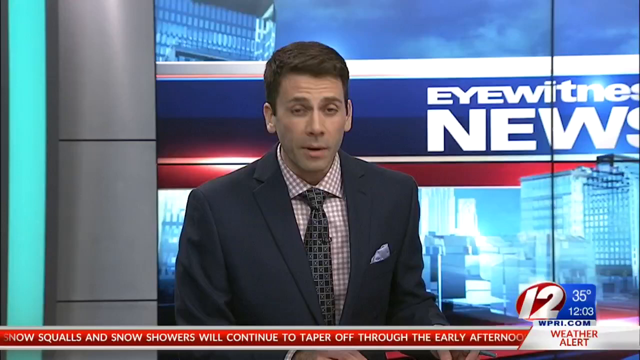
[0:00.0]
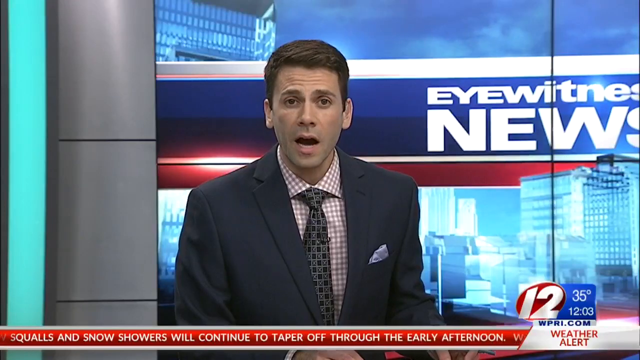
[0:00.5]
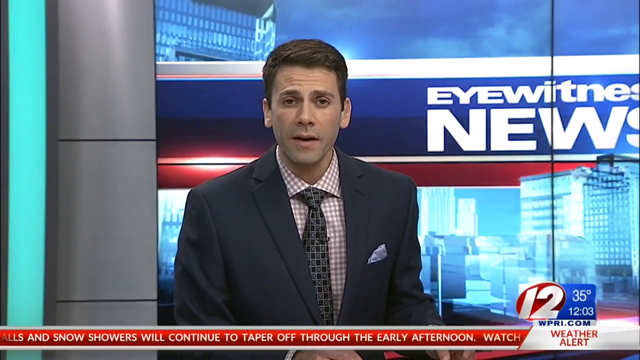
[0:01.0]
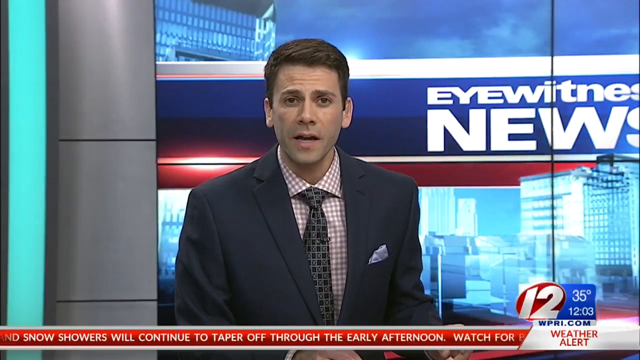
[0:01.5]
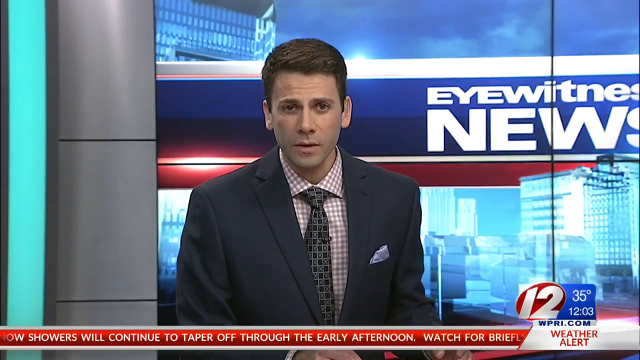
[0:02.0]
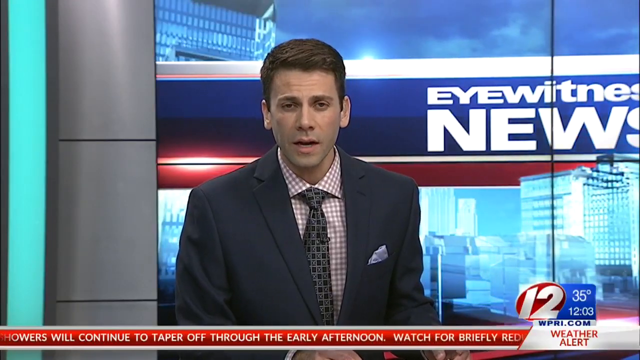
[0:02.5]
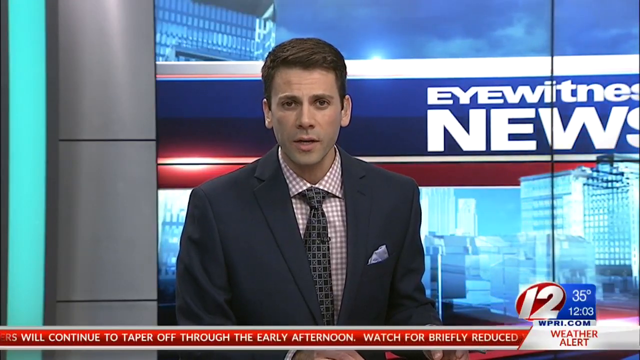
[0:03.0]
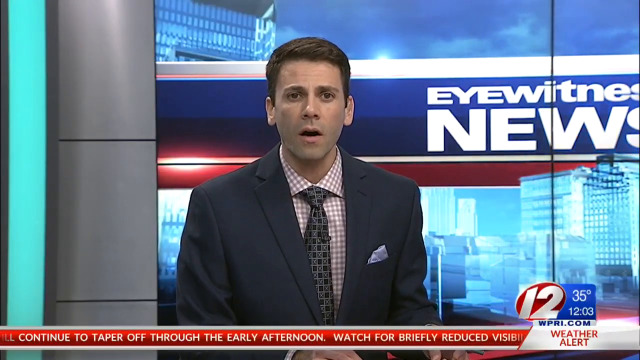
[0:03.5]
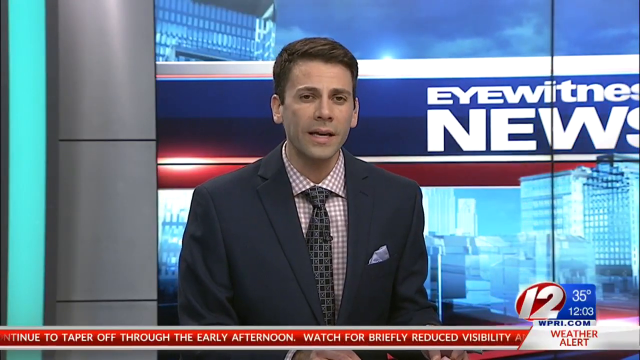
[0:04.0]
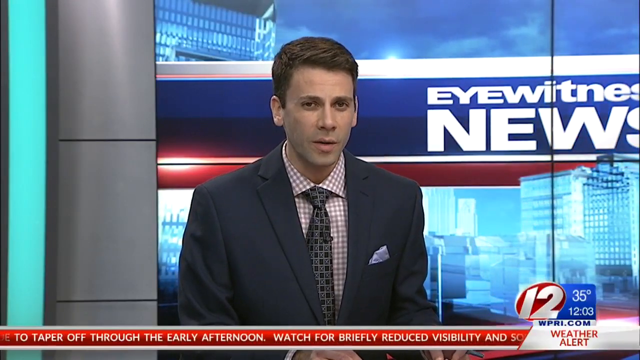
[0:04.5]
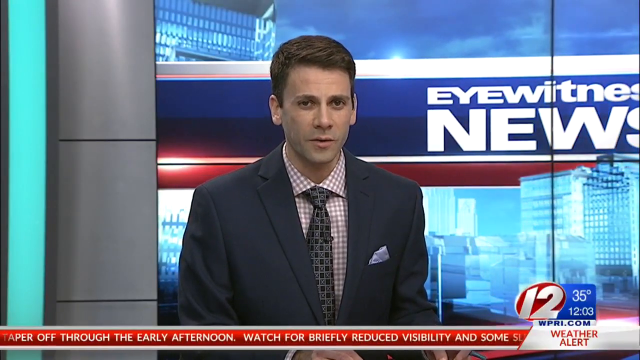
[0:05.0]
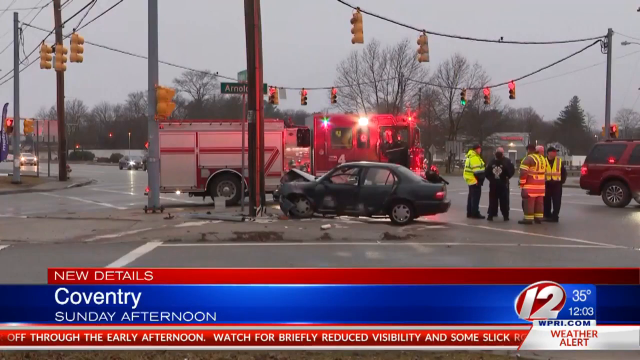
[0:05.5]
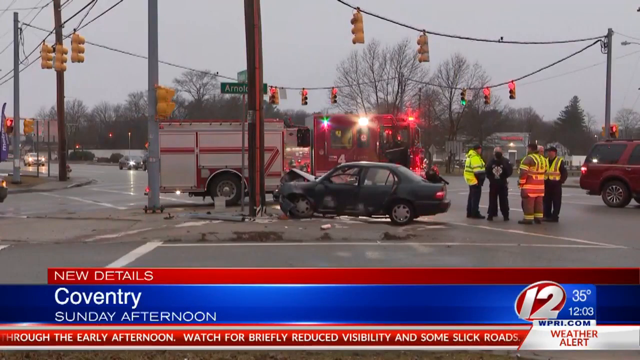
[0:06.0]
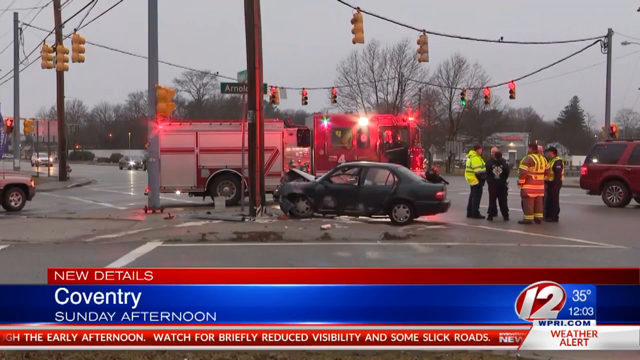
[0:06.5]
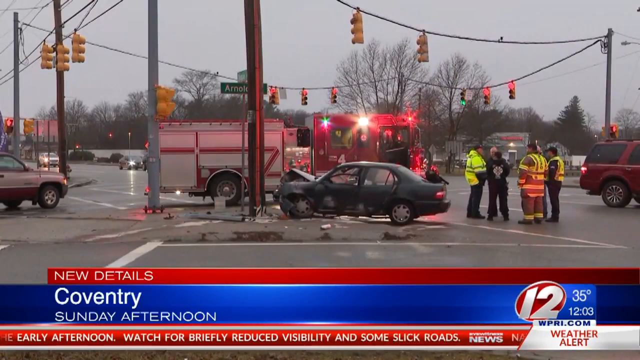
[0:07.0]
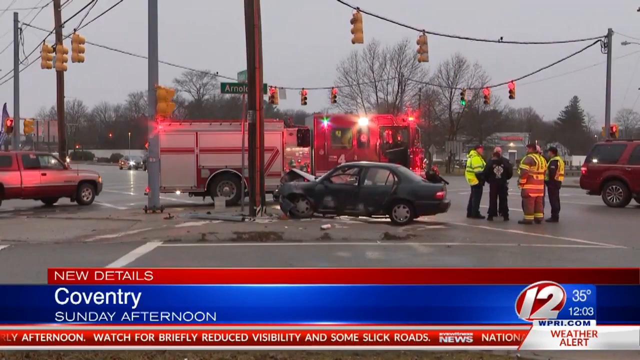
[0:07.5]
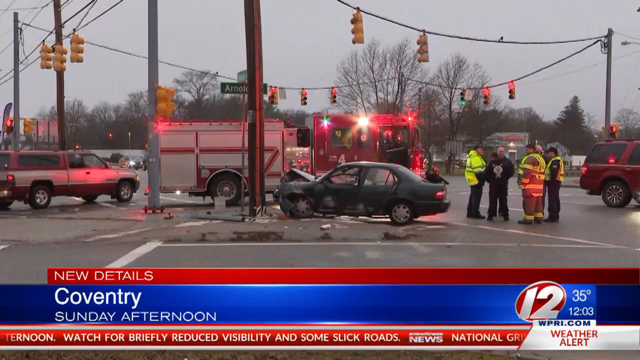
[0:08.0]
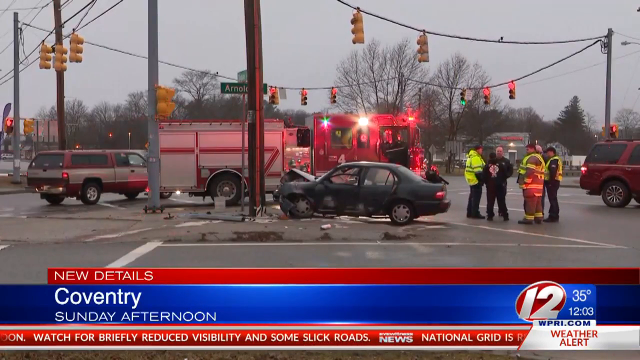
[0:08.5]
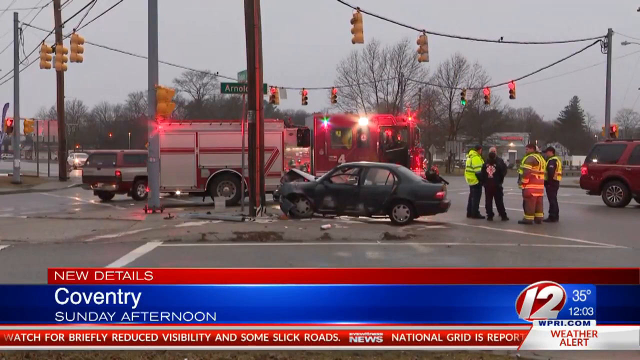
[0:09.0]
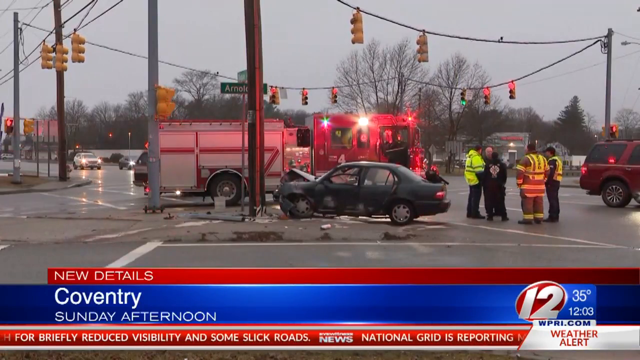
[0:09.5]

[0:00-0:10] A man wearing a black jacket and a boxy pink shirt with a dotted tie is presenting, moving his hands as he talks. The screen then shows an accident: it seems a car has hit a pole. Five people, apparently paramedics, are there. On the left side a car is moving, while the reddish car on the right is standing still and not moving. At the bottom, white text on a reddish background reads "new details", and white text on a blue background reads "Coventry".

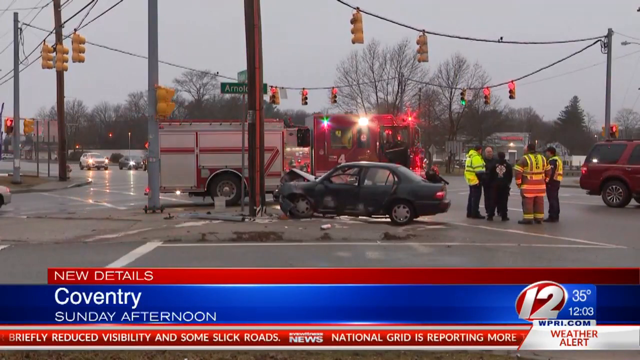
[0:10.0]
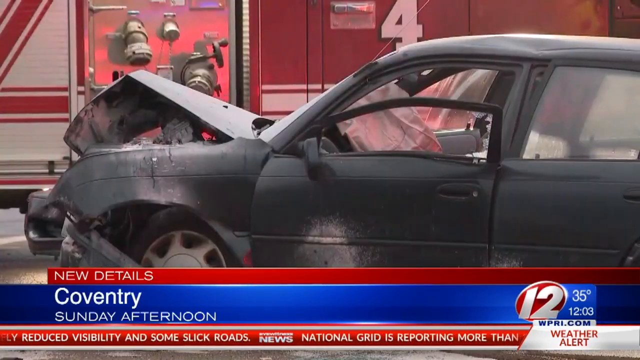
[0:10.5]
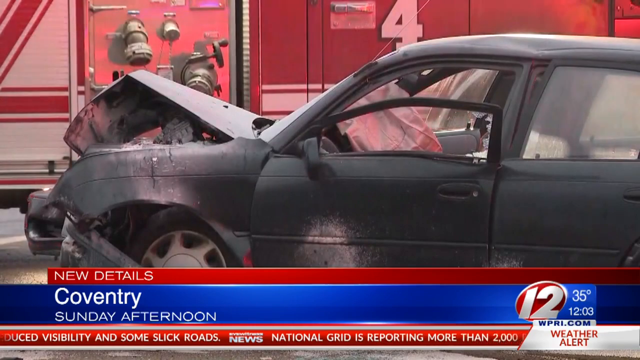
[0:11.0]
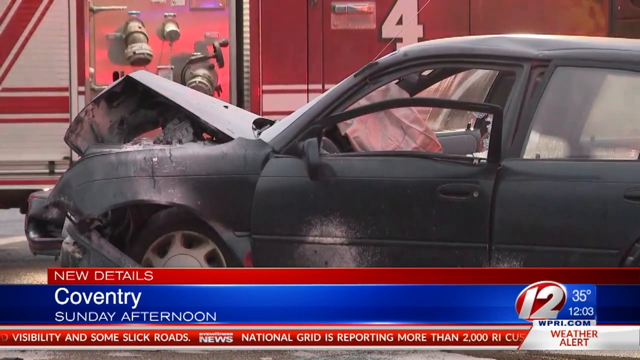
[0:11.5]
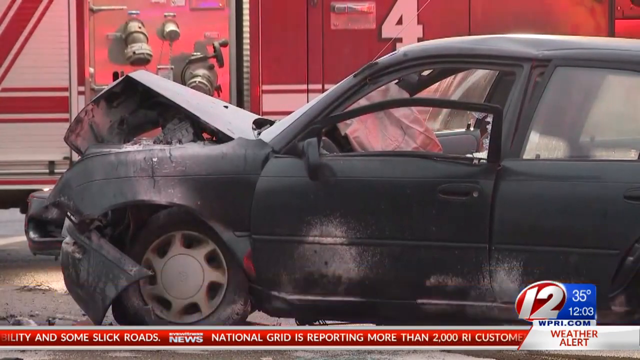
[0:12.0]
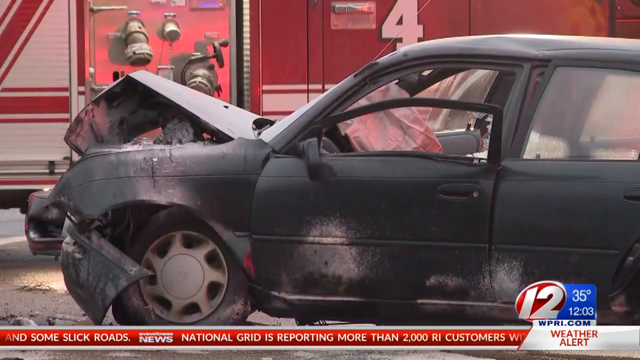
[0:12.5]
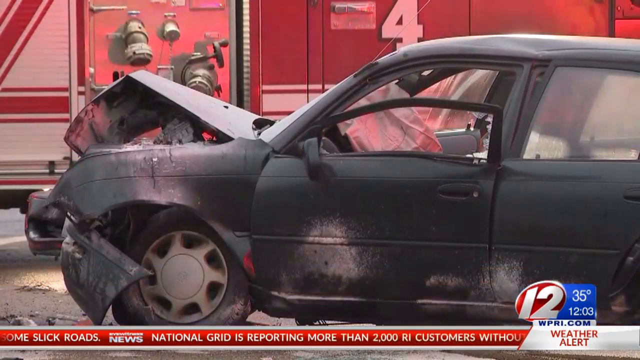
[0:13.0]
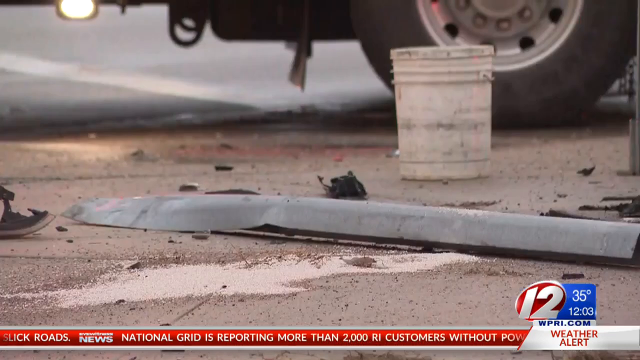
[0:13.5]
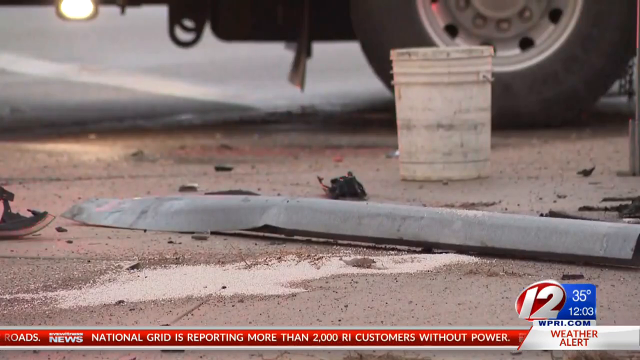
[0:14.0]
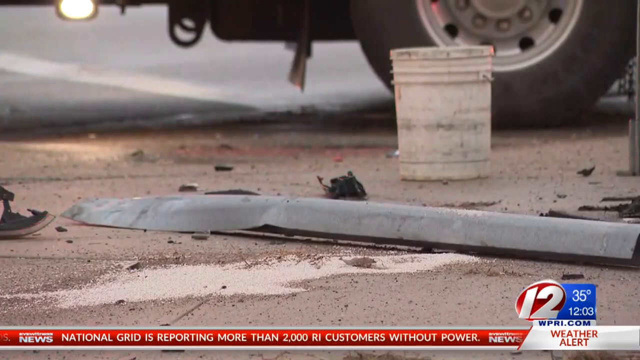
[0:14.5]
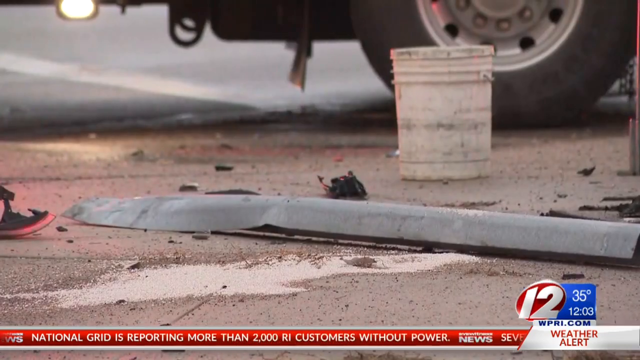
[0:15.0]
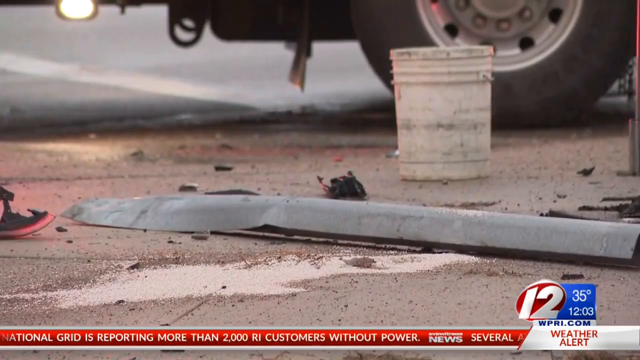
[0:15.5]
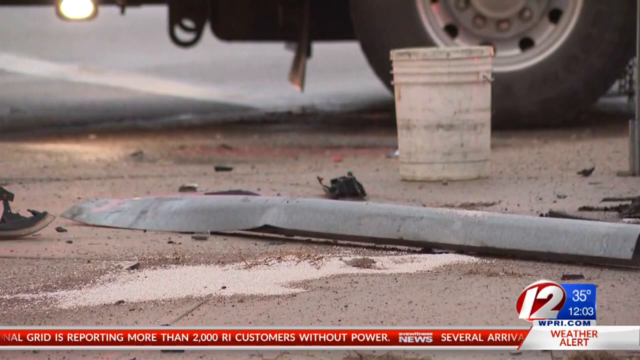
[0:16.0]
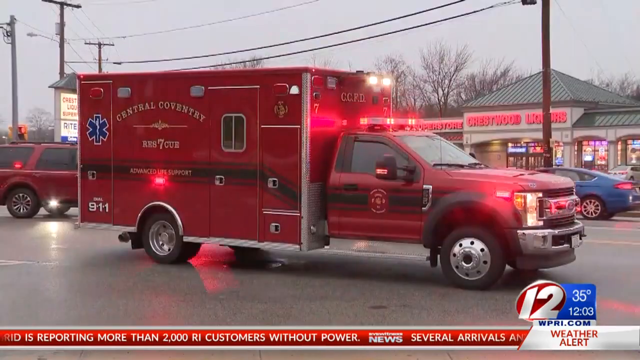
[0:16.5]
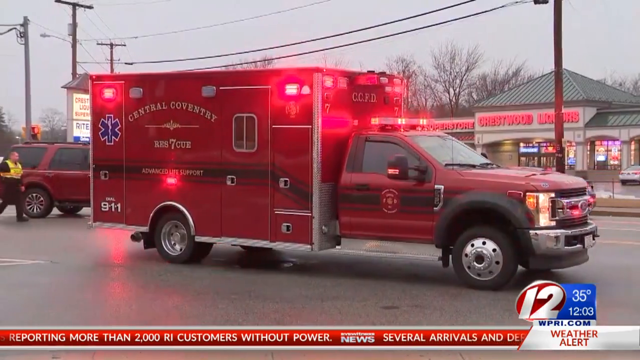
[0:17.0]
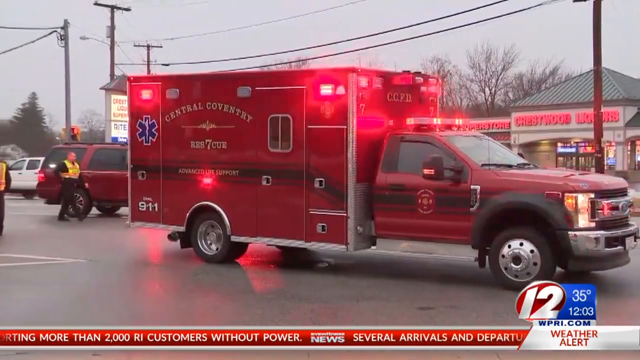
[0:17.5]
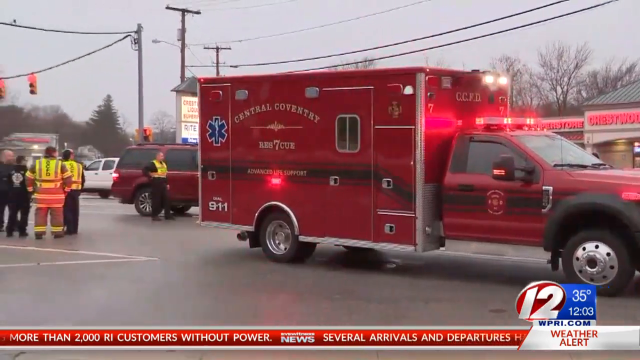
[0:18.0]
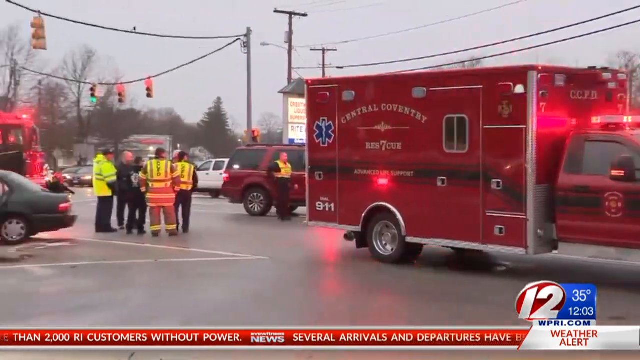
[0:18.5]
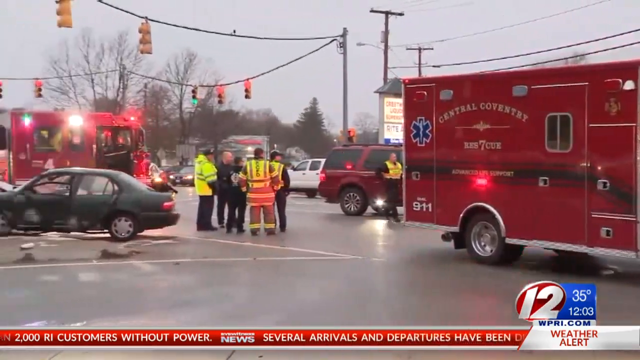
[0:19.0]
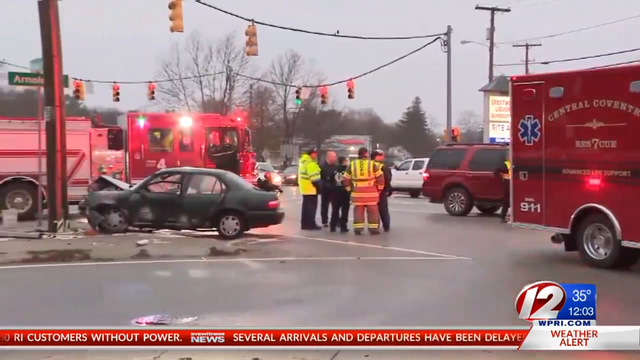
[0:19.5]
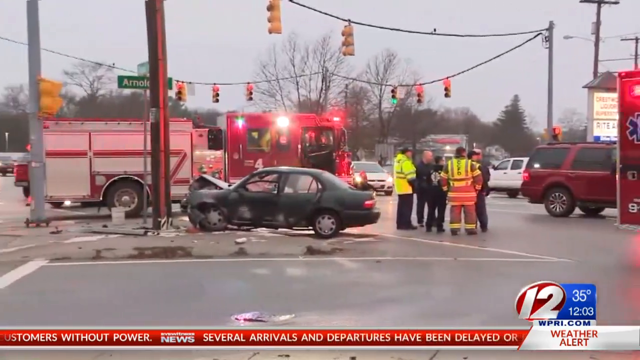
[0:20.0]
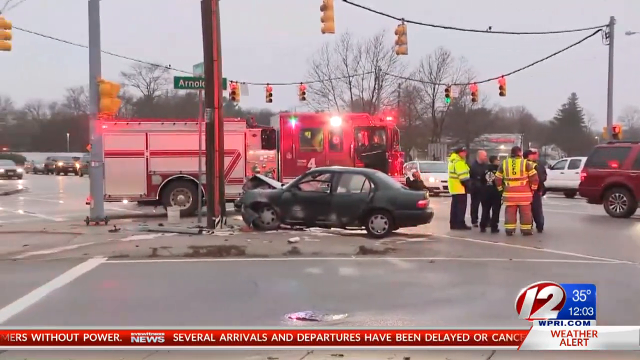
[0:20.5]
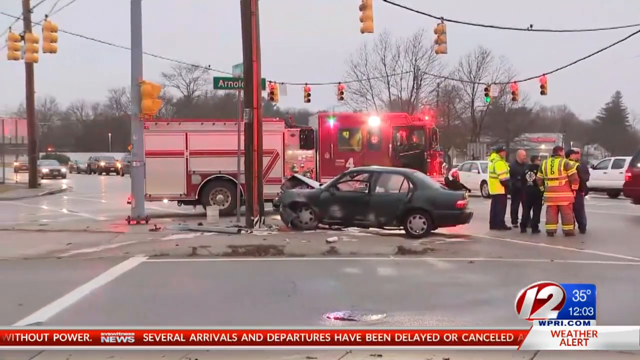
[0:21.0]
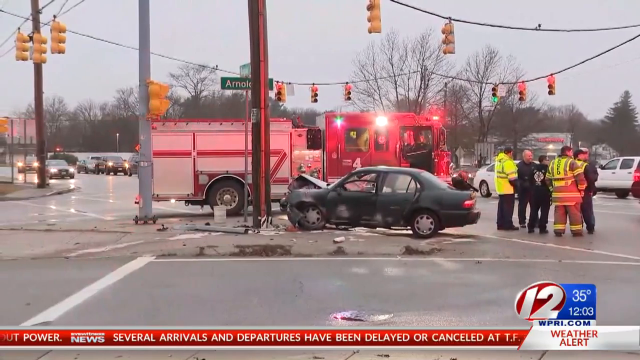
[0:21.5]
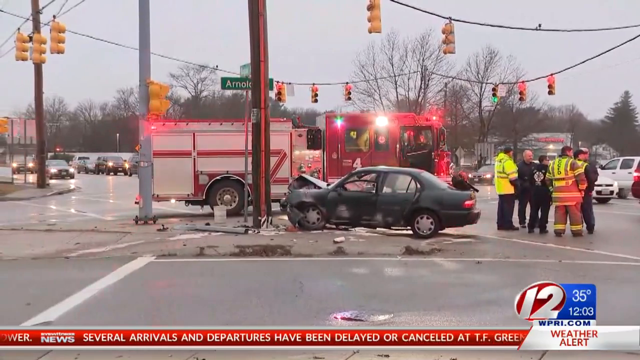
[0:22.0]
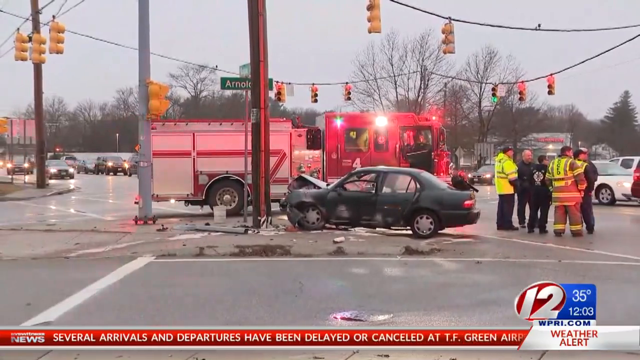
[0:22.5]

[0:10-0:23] The car is black and has sprays on it; its bonnet is smushed and ruined, and the door is also ruined. The view zooms in on the car, and in the background the number four is written on what appears to be an ambulance. Parts have fallen down, and there is a white bucket. A red ambulance of the Central Coventry Rescue is shown. A lady is moving the camera, moving around and showing everywhere. As the camera moves, "Arnold" appears in white font on a green board.